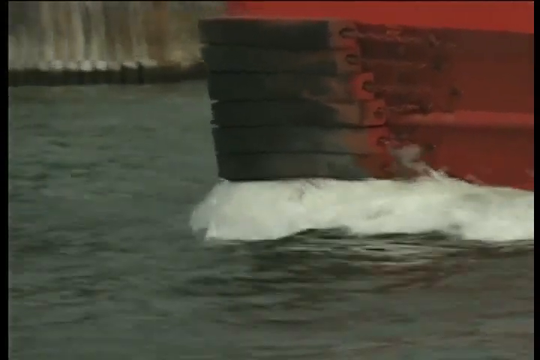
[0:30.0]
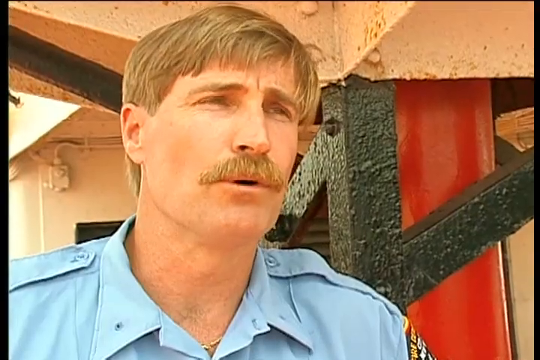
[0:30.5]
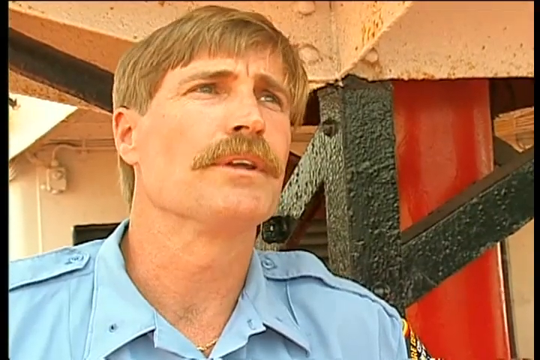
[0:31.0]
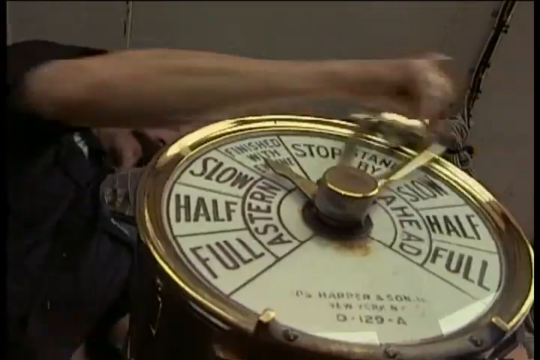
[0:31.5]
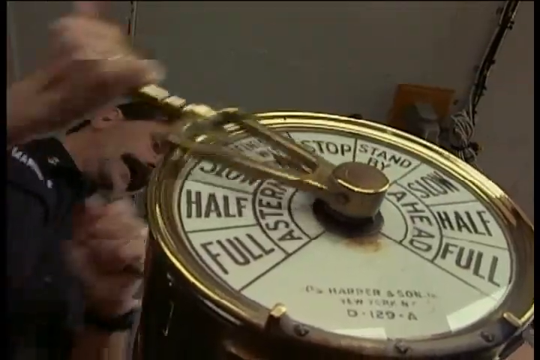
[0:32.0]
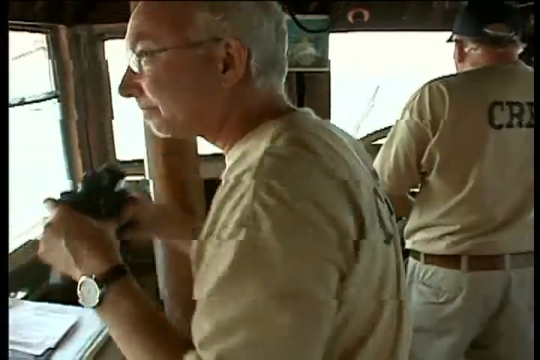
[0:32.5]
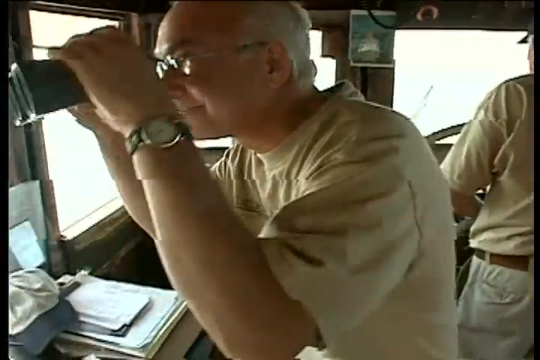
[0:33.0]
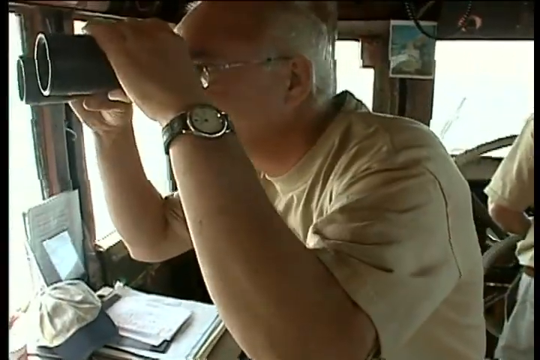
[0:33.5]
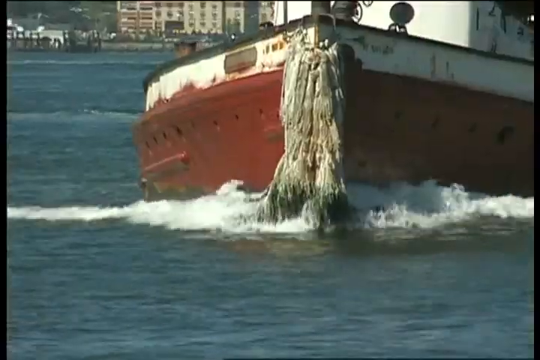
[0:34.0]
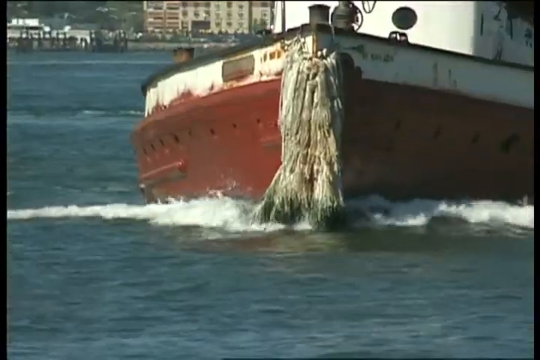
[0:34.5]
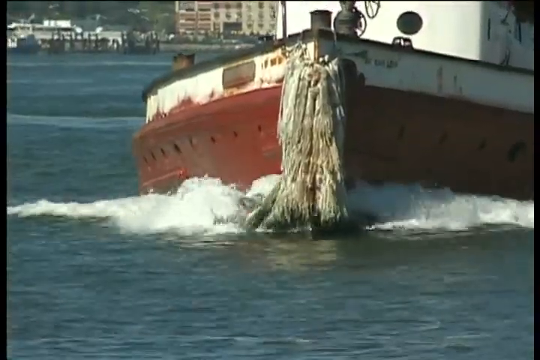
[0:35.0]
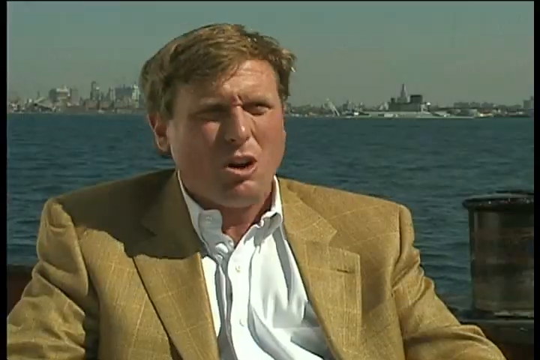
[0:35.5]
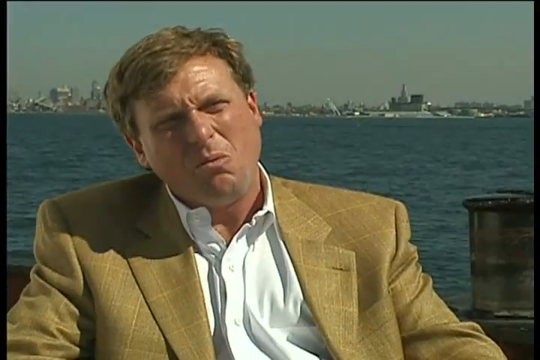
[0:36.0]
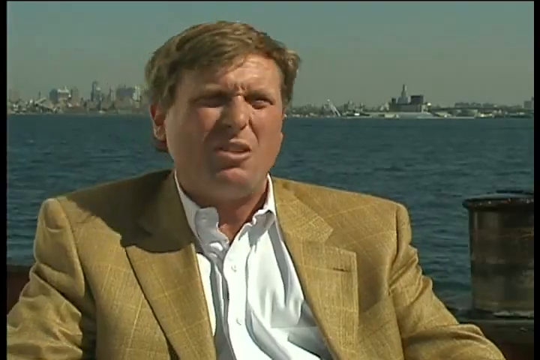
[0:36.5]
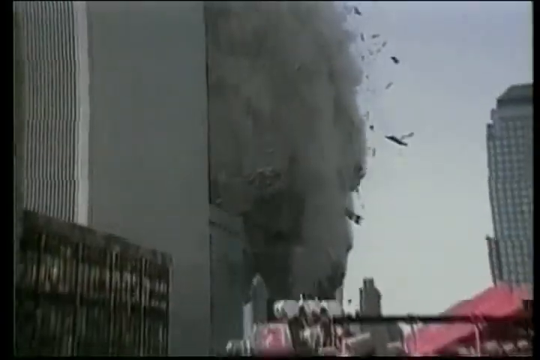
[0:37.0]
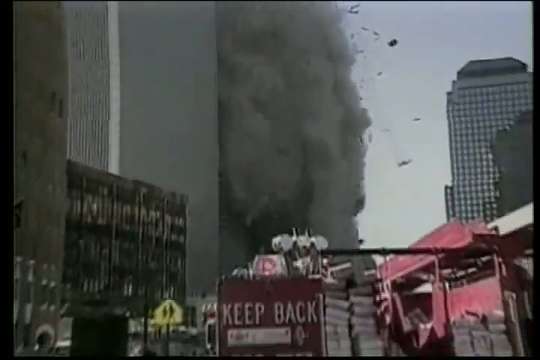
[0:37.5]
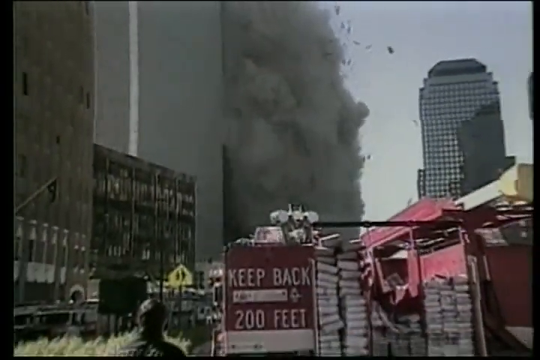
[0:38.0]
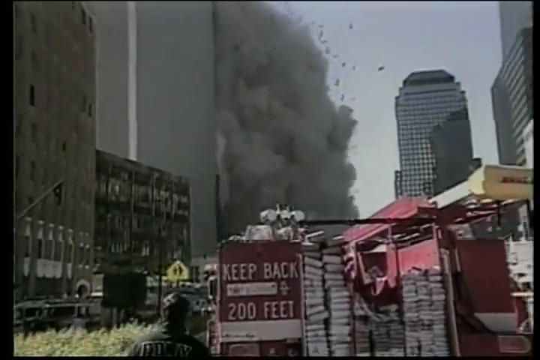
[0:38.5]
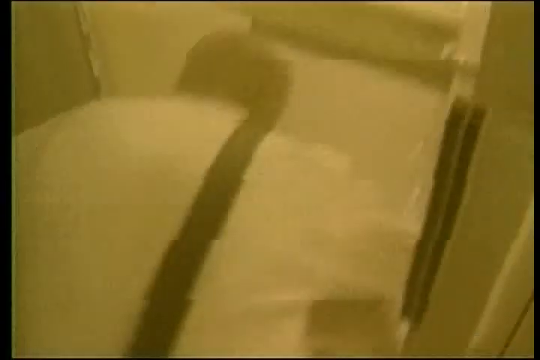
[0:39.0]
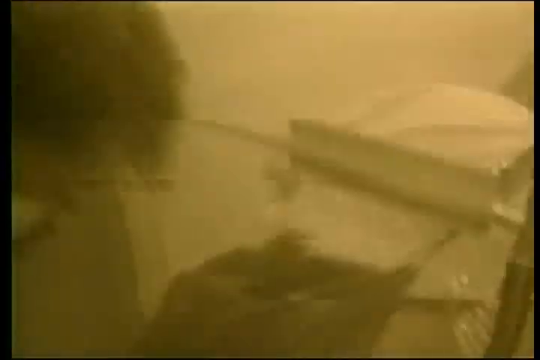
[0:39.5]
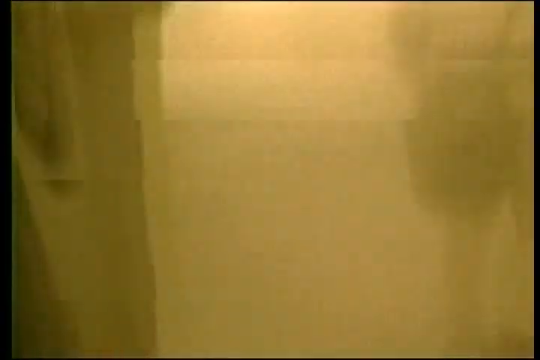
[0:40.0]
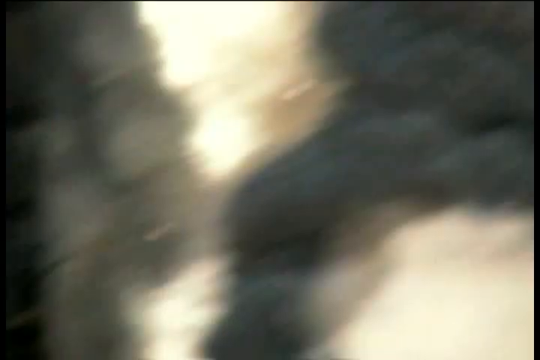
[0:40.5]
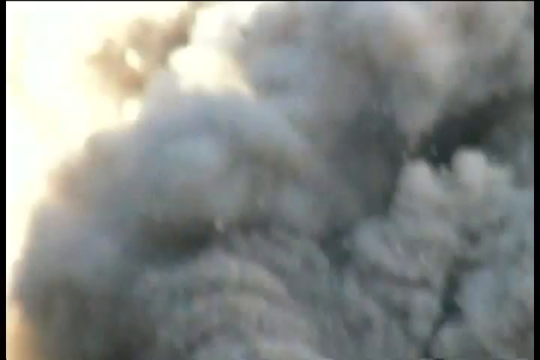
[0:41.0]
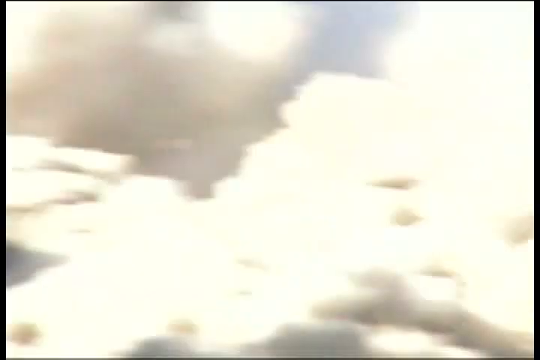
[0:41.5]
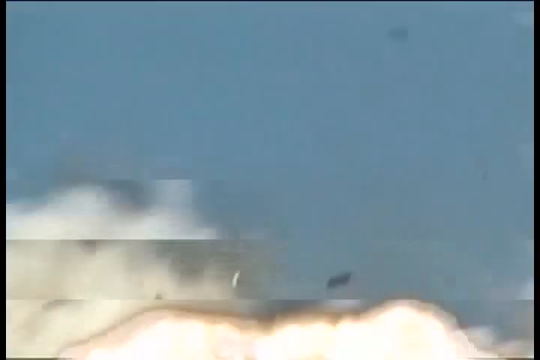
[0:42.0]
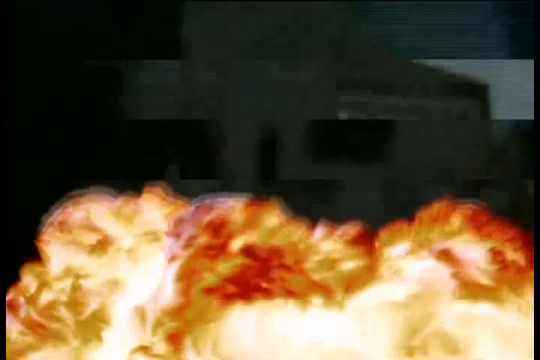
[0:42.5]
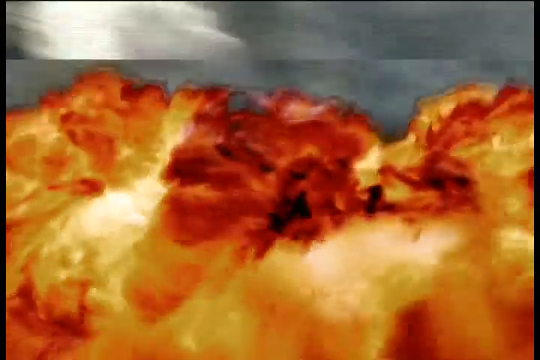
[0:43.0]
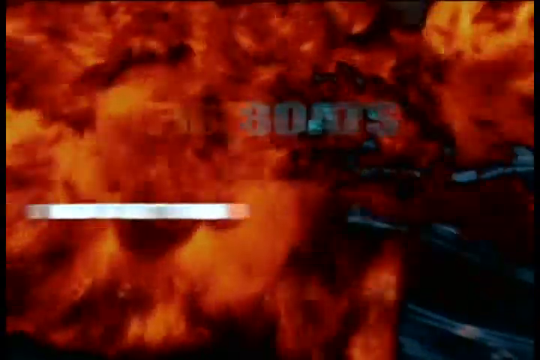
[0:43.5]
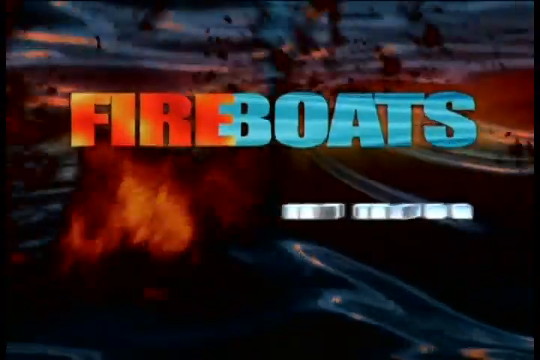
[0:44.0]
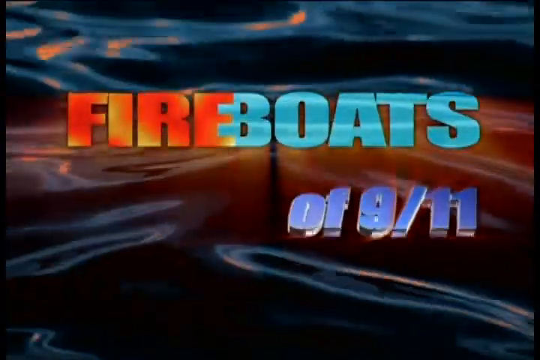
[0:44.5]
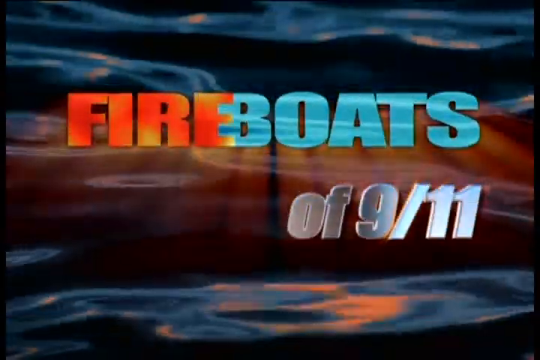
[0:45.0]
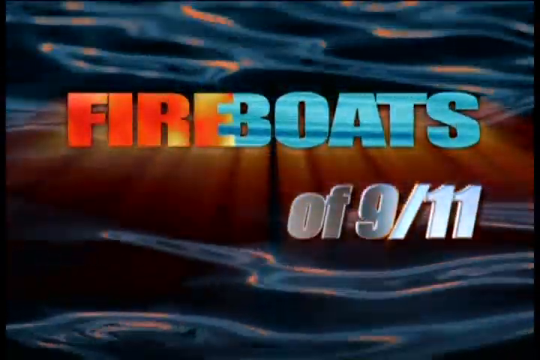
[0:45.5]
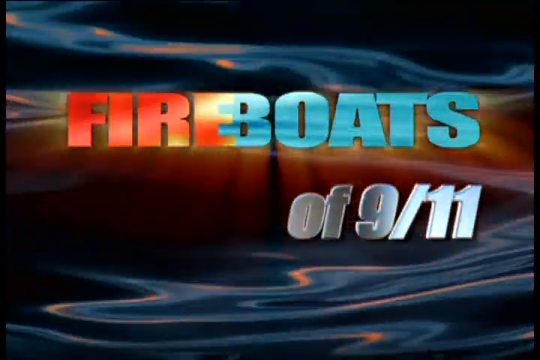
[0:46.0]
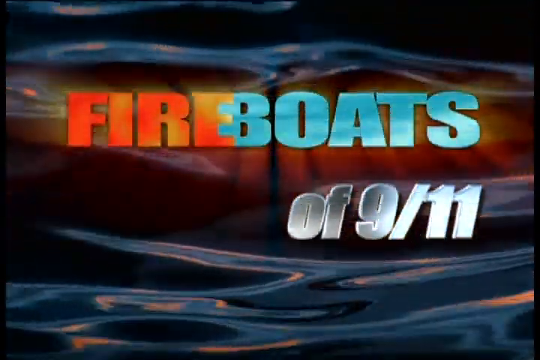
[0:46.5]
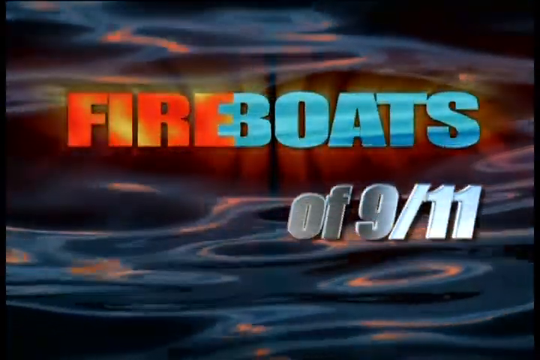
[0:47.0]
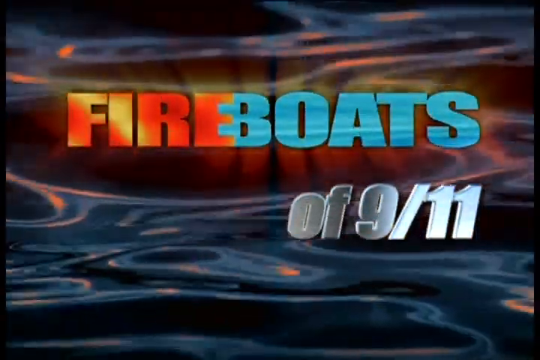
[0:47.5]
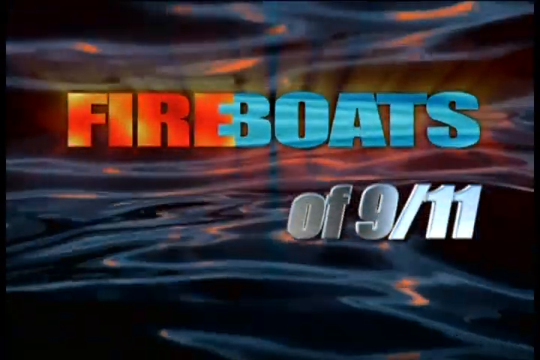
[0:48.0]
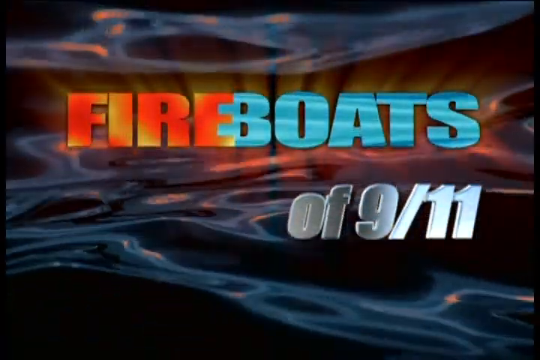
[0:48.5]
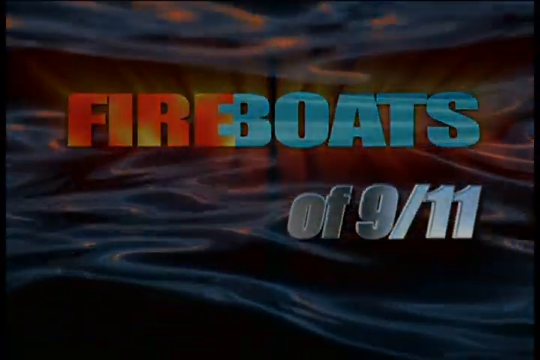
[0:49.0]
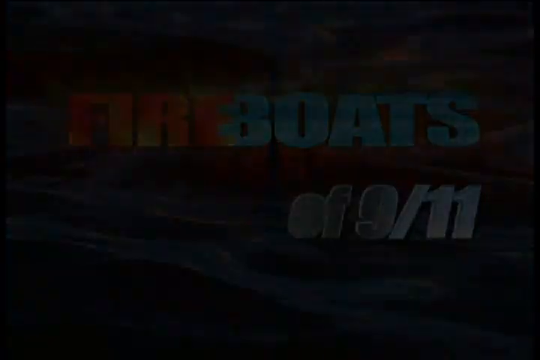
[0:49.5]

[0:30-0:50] The bottom of a boat is shown in the water, its tip pointing toward the left side of the screen, with the water churning white around it. A man with blonde hair and a mustache, wearing a blue suit, talks. Some men are in a boat; one of them looks through binoculars, and the boat is shown moving. A man sitting in a gold suit with a white shirt faces the camera and talks. One of the Twin Towers collapses, followed by more images of the towers collapsing. An explosion comes from the bottom of the screen and flames go up, against a background that looks like dark, rippling water. The words "fire boats" appear on the screen, with "fire" in red and "boats" in blue, and "of 9-11" in silver.